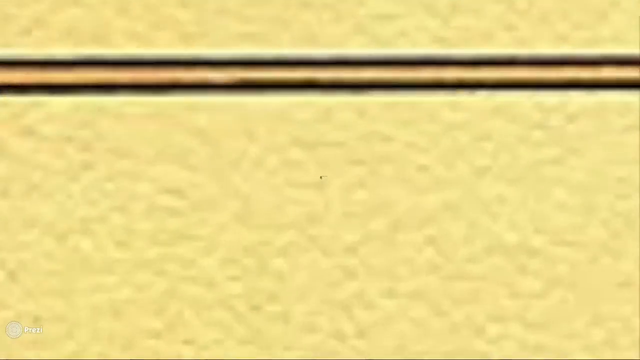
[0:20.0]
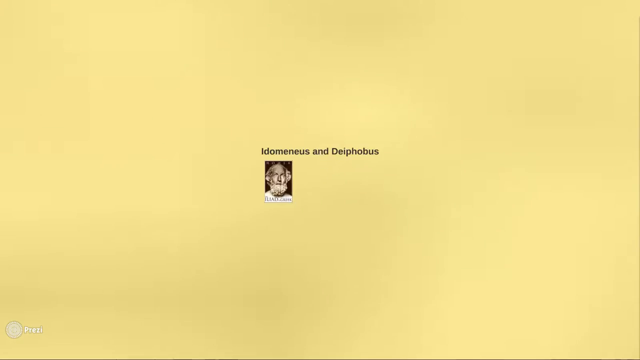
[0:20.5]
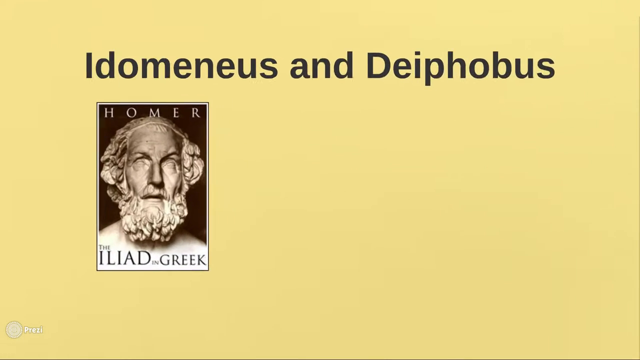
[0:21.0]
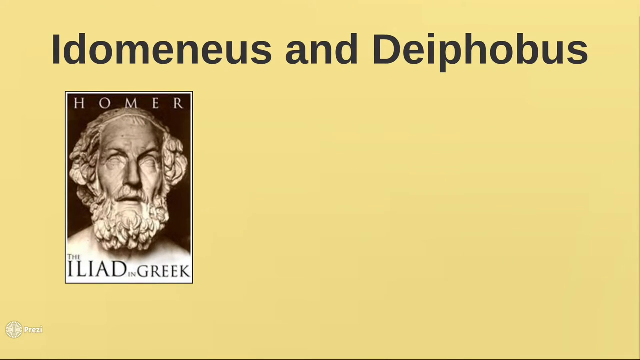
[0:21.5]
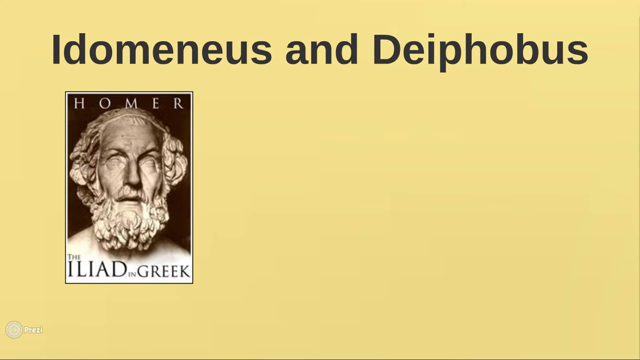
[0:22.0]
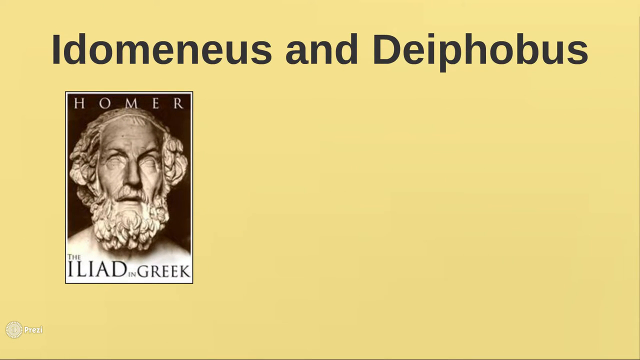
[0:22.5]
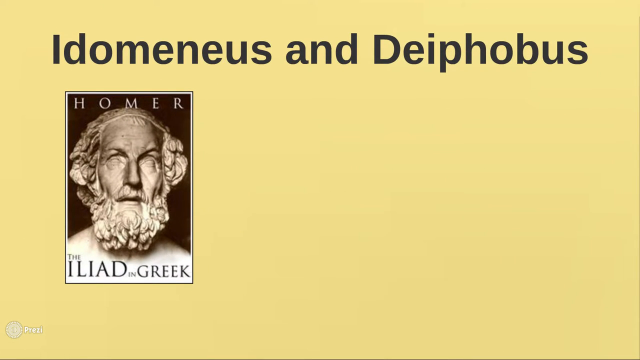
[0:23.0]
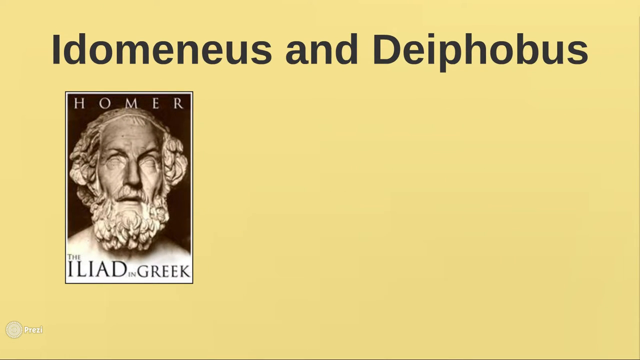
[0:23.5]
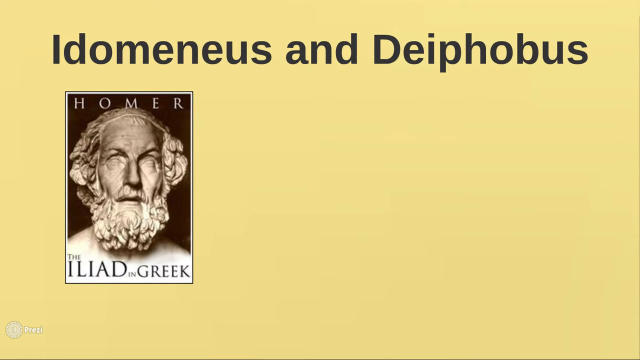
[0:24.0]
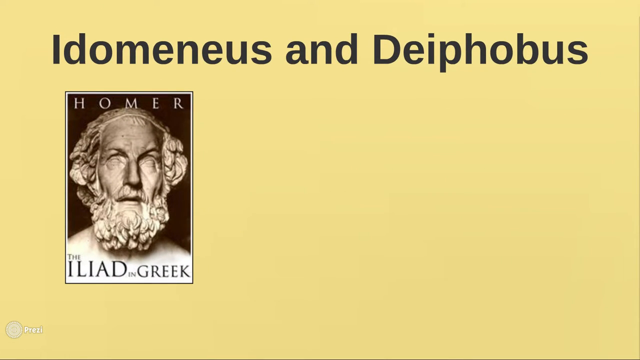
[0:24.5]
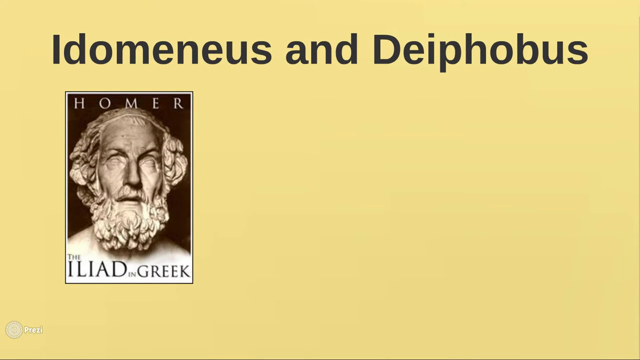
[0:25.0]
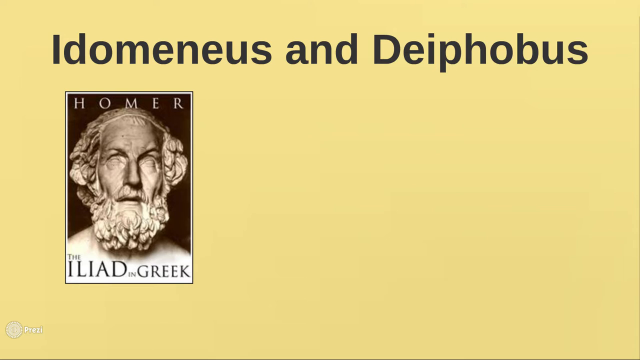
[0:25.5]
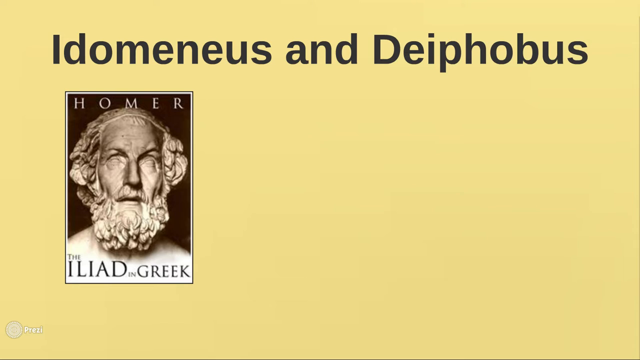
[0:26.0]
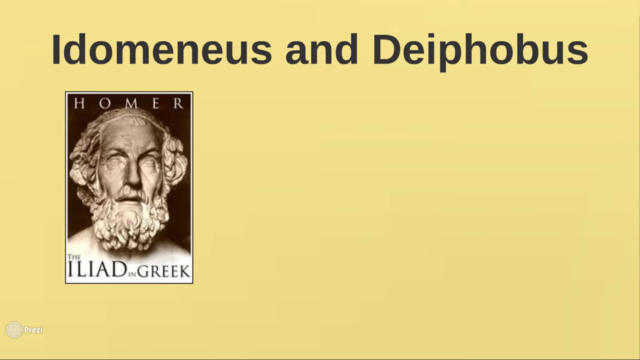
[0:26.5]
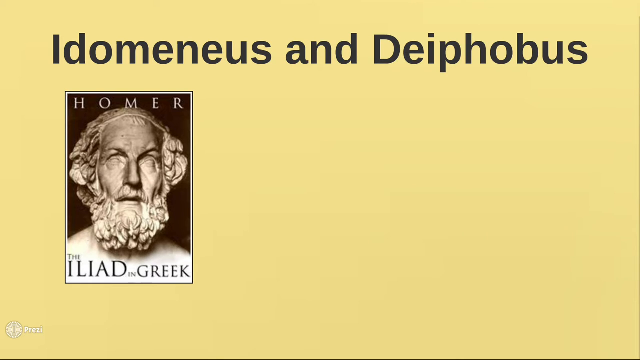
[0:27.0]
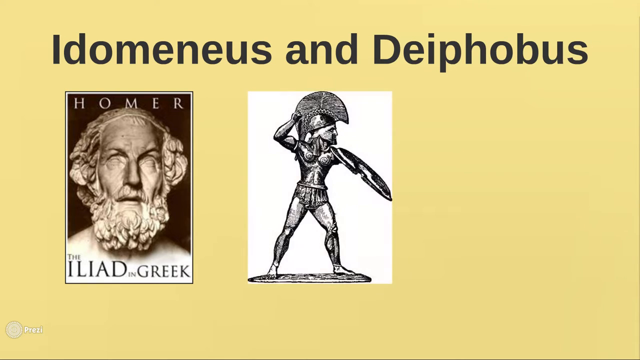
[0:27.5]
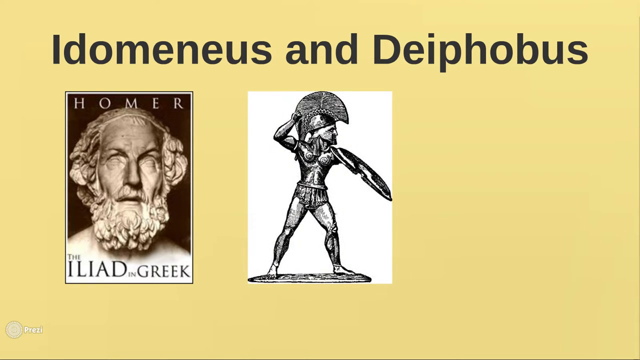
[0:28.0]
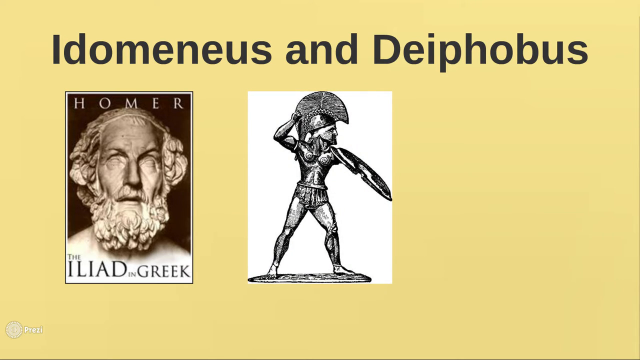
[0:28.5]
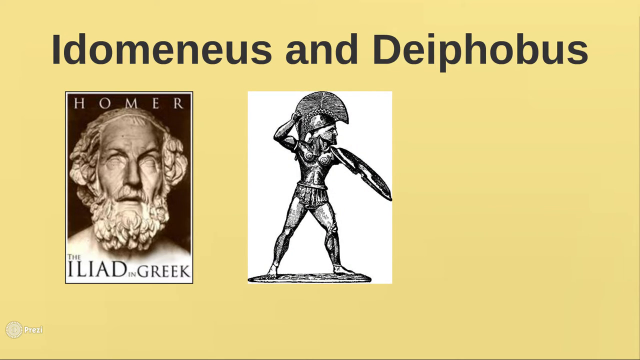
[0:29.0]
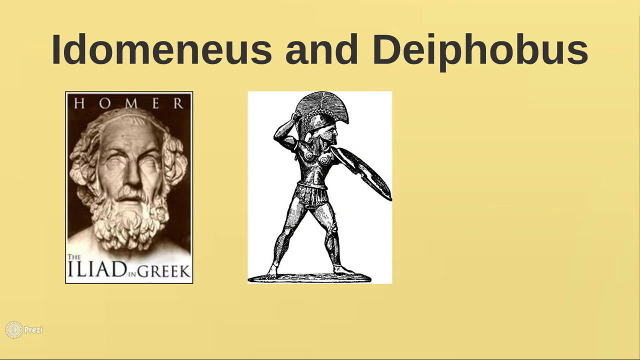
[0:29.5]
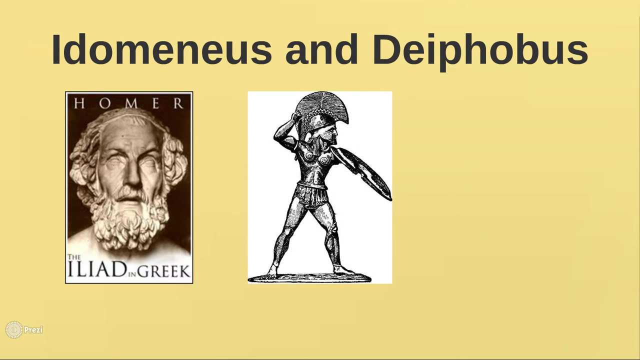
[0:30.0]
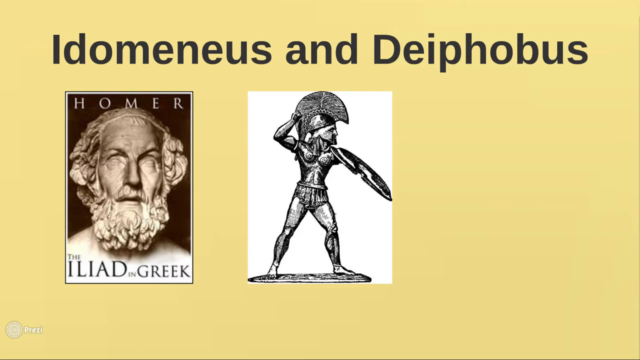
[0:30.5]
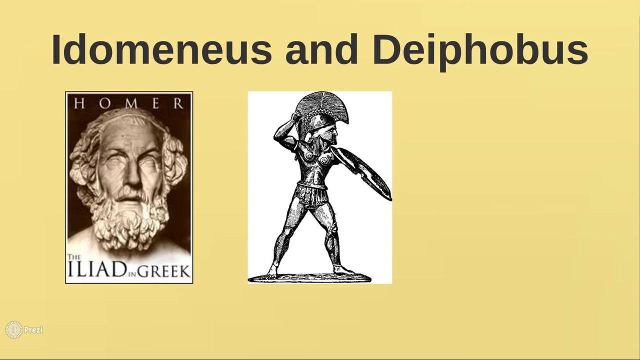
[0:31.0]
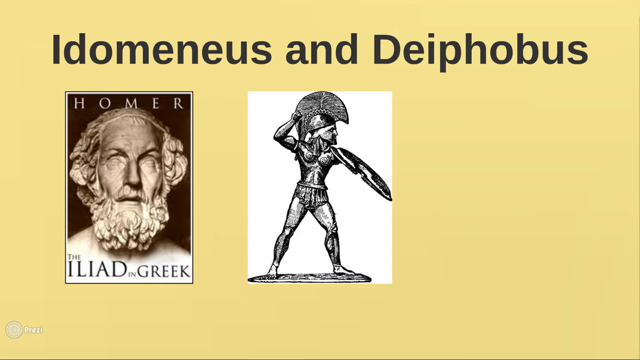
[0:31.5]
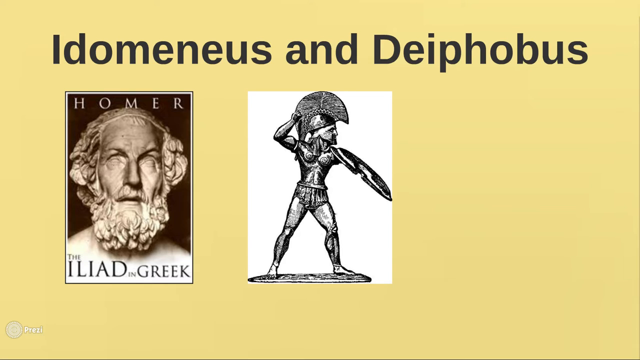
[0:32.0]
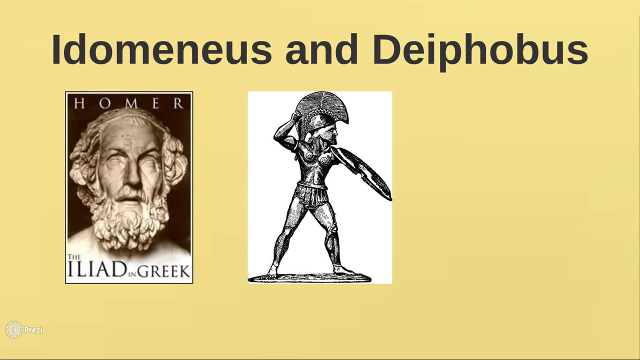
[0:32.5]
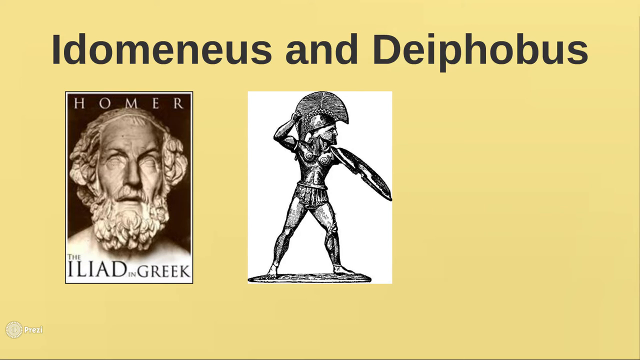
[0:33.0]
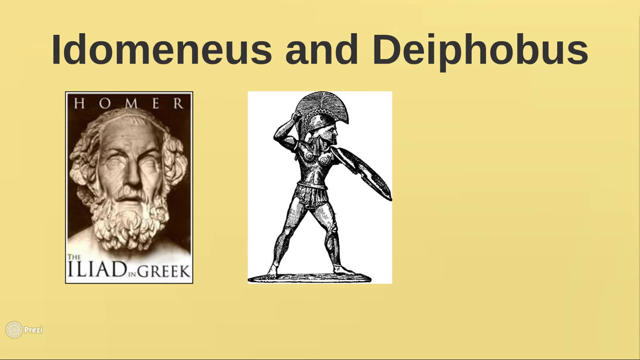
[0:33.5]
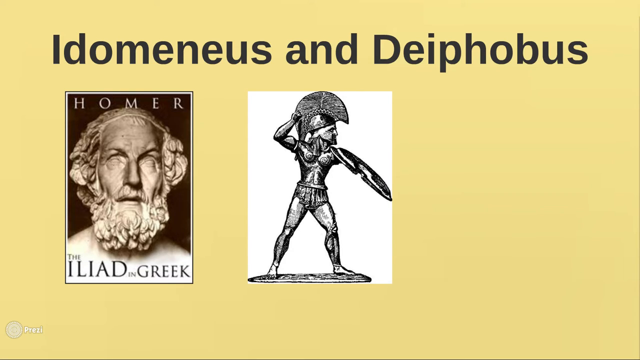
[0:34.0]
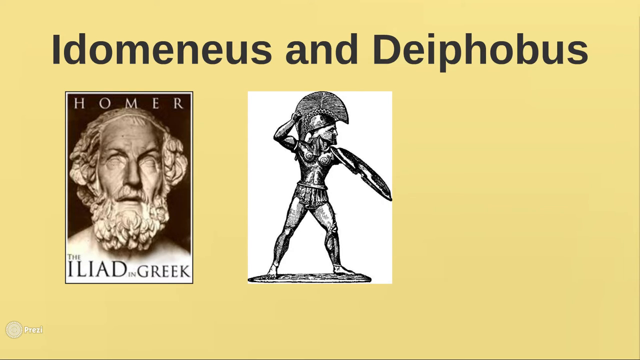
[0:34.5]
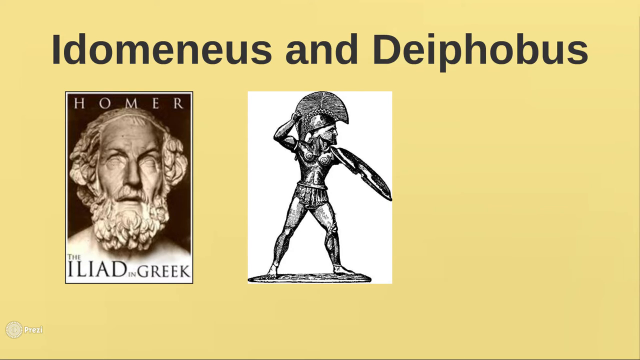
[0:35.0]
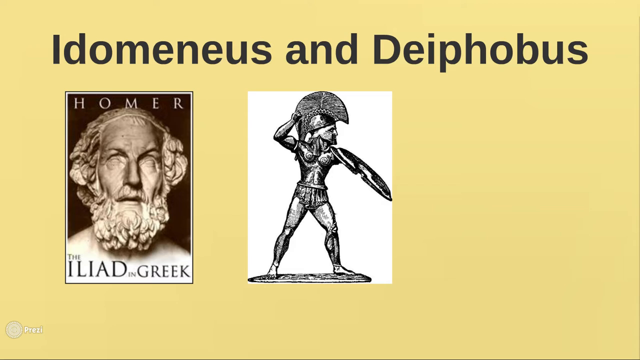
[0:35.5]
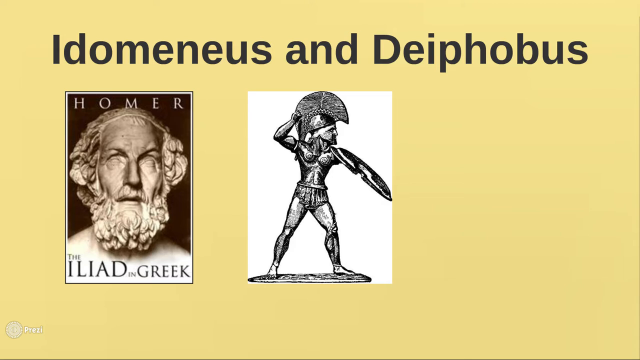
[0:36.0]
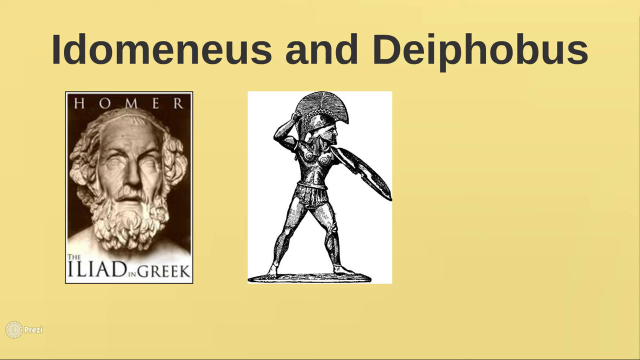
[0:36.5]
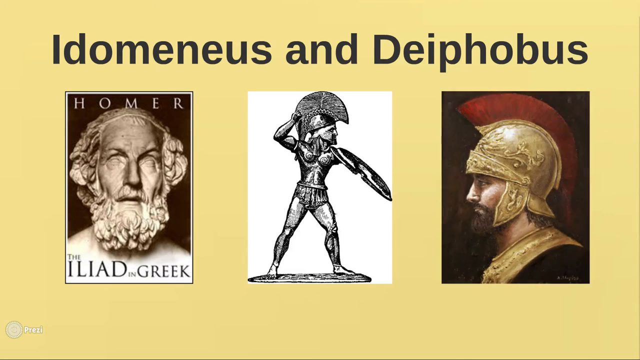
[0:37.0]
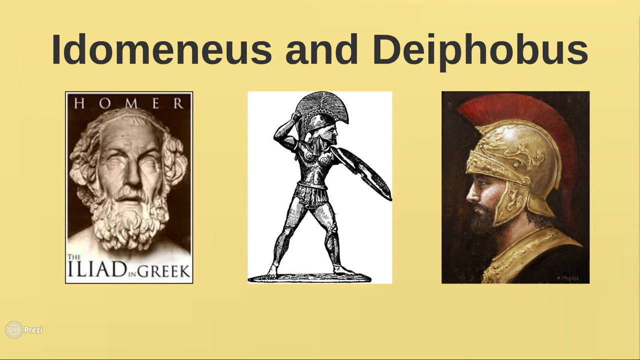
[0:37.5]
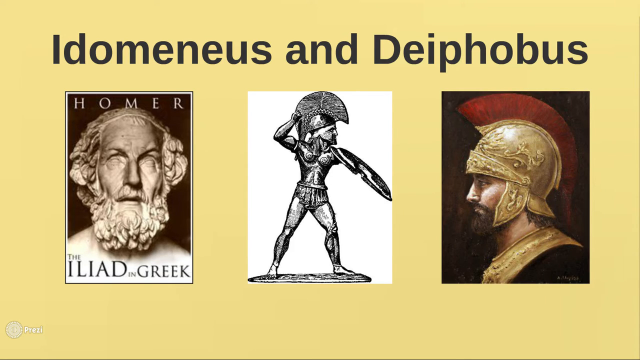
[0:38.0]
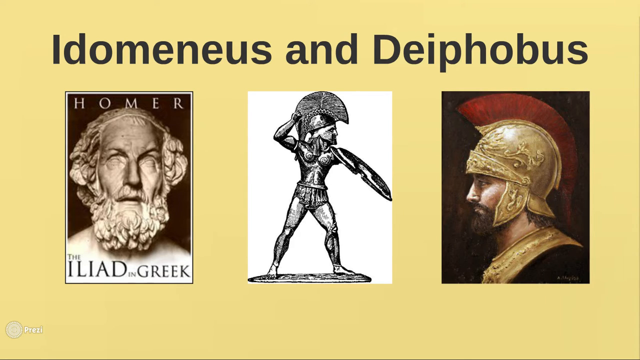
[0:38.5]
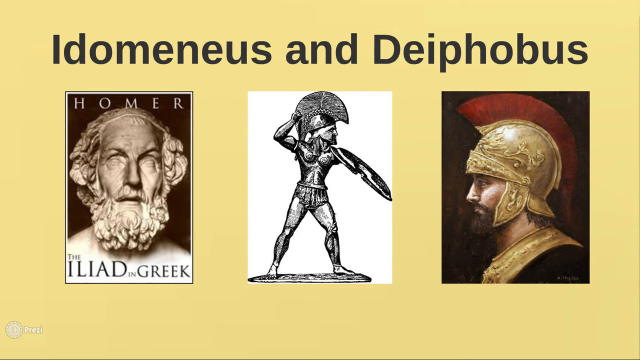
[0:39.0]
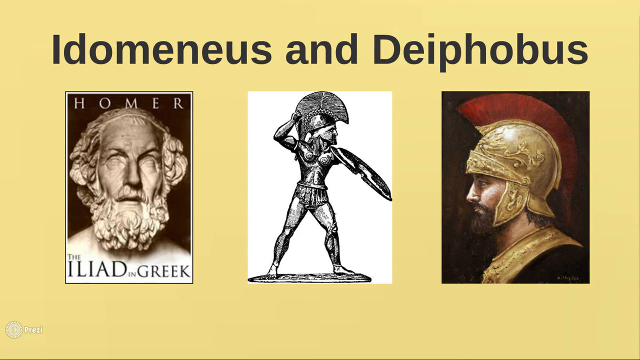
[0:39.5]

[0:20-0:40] A screen appears with two straight black lines across the top; the screen has a texture, perhaps a painted, textured-wall look, and is kind of beige. The view gets really close, showing big writing with the names "Idiomenus and Diphobus". Below the title is a picture of a book called Homer the Iliad in Greek. To its right, another small rectangle comes up with a black and white image of a man who looks like a warrior. The last picture, further right, shows a man who appears to be white wearing a gold helmet with red, almost fur-like hair running like a mohawk down its top. This last image is dark but looks kind of brought into modern times. The three images, possibly books or pictures, sit side by side under the title with some space between each one.